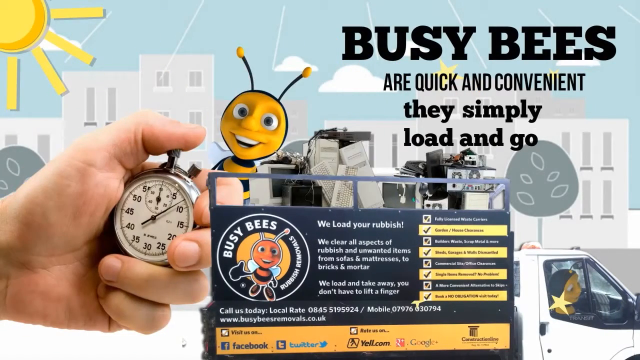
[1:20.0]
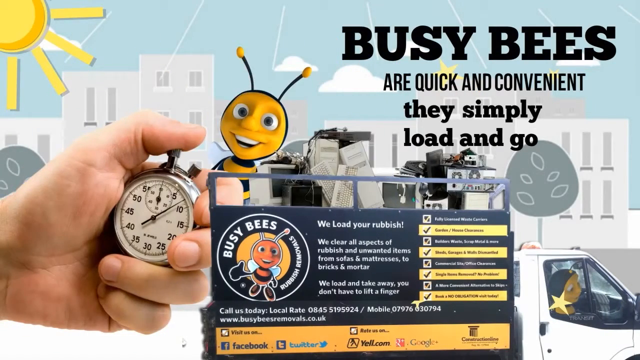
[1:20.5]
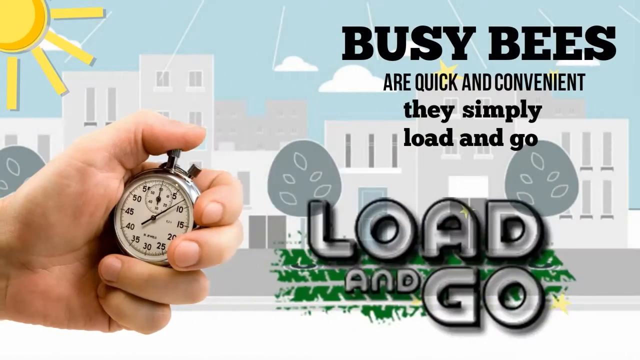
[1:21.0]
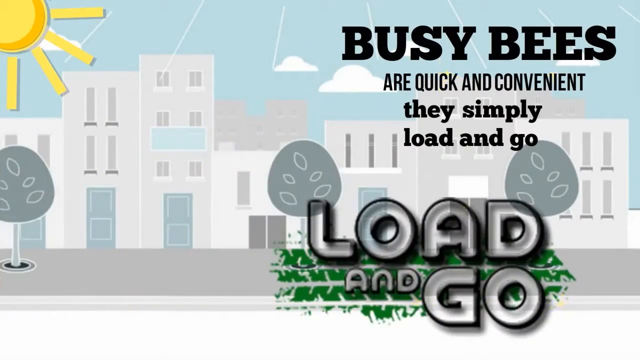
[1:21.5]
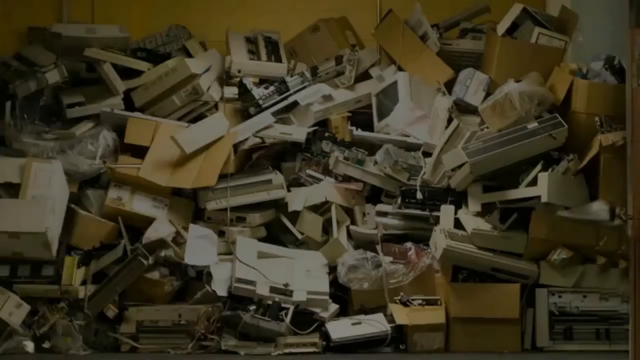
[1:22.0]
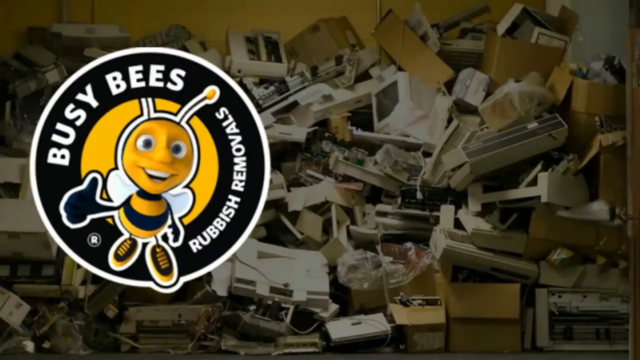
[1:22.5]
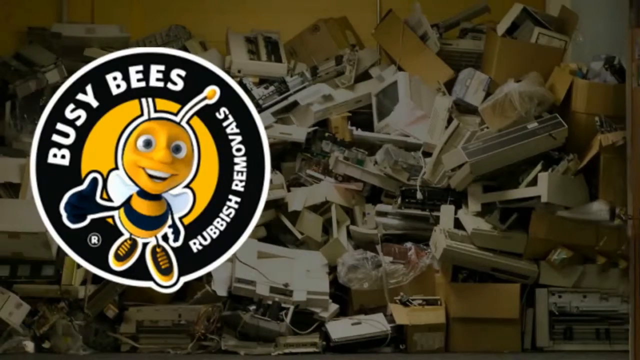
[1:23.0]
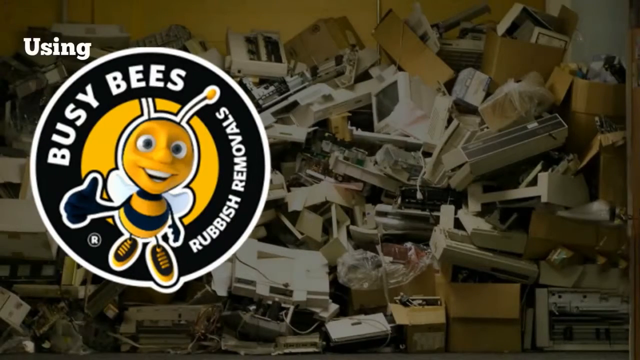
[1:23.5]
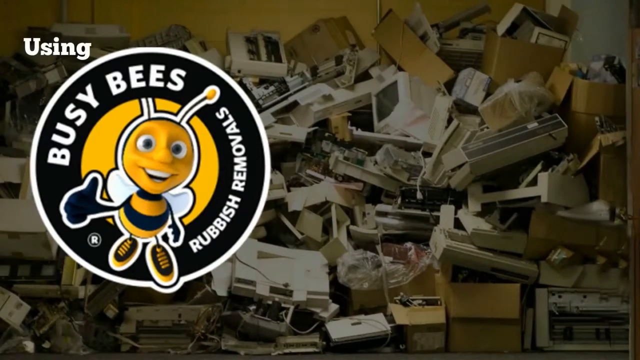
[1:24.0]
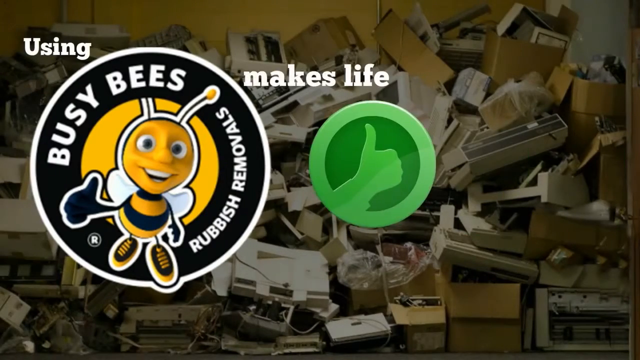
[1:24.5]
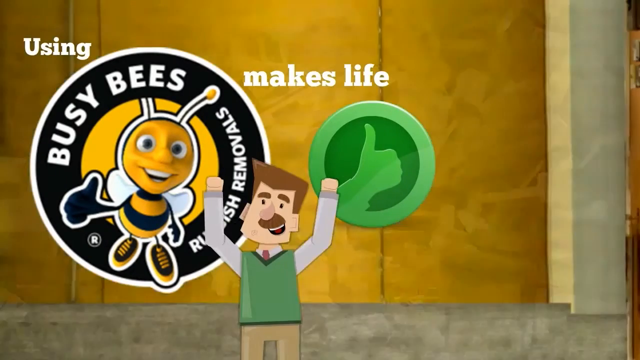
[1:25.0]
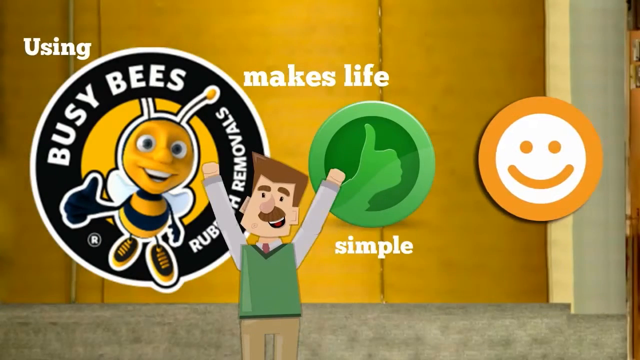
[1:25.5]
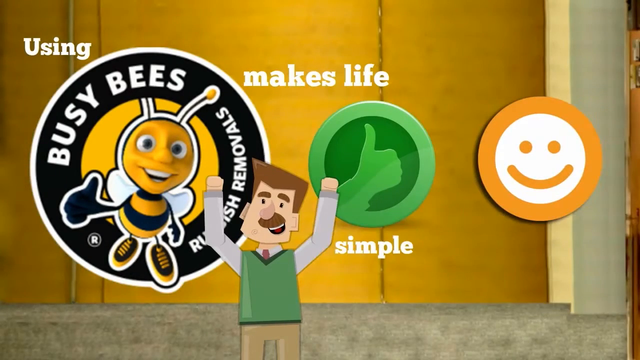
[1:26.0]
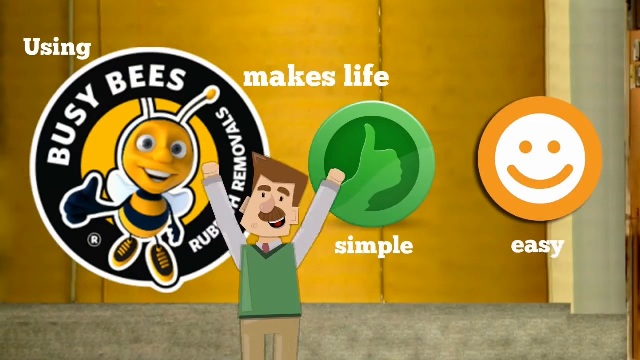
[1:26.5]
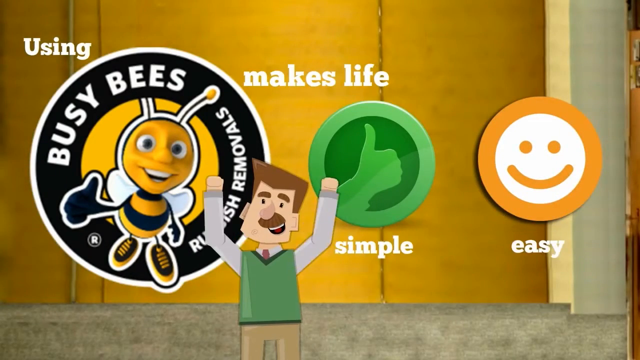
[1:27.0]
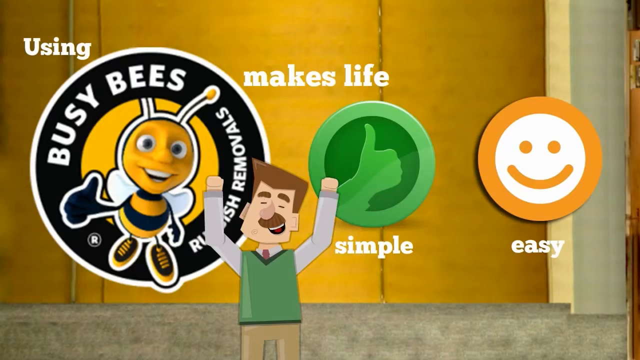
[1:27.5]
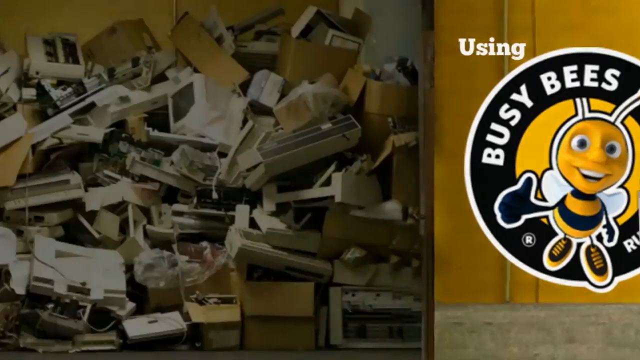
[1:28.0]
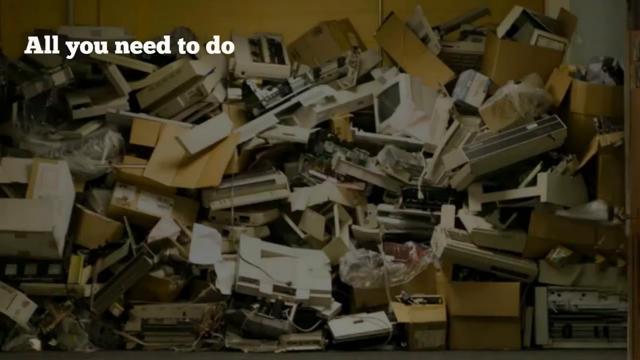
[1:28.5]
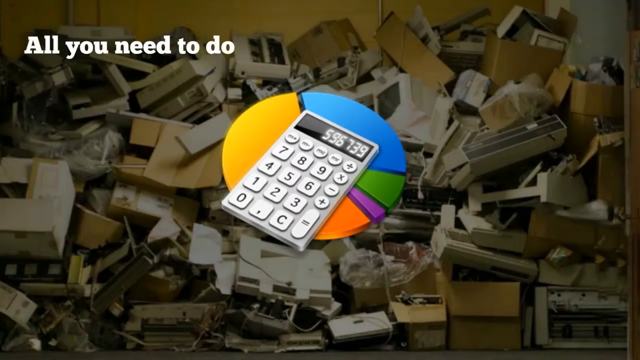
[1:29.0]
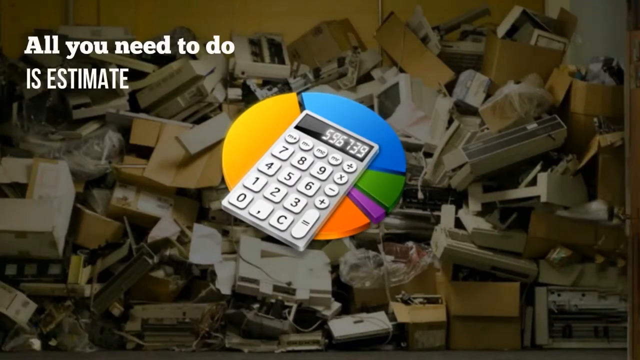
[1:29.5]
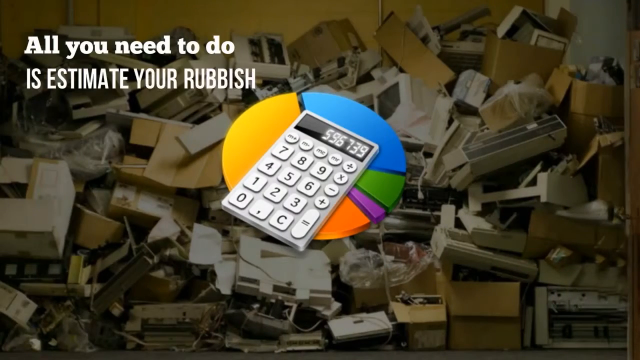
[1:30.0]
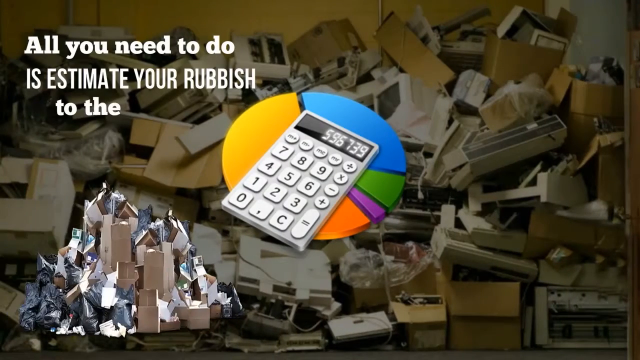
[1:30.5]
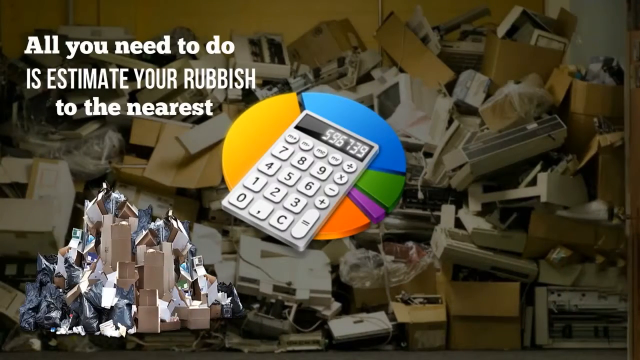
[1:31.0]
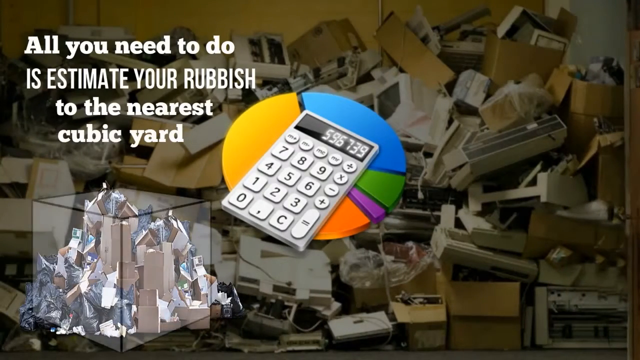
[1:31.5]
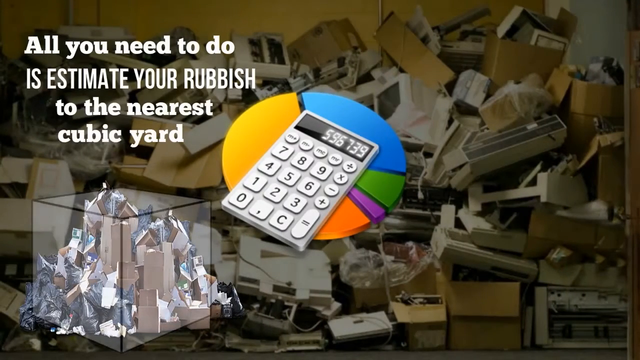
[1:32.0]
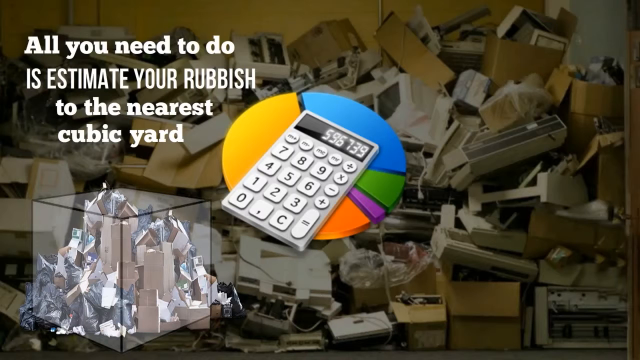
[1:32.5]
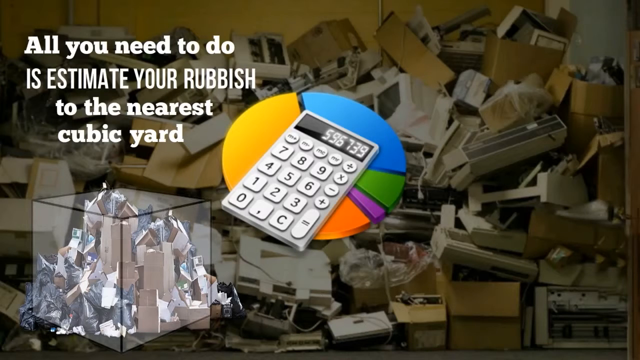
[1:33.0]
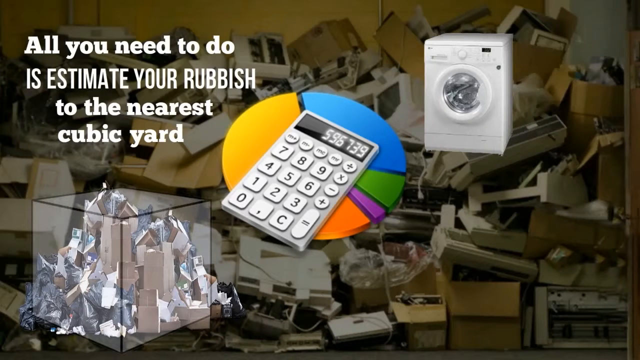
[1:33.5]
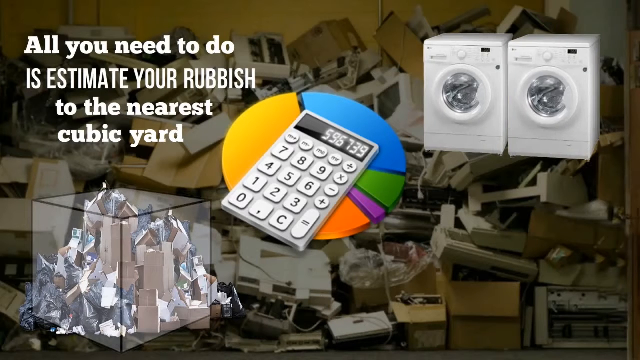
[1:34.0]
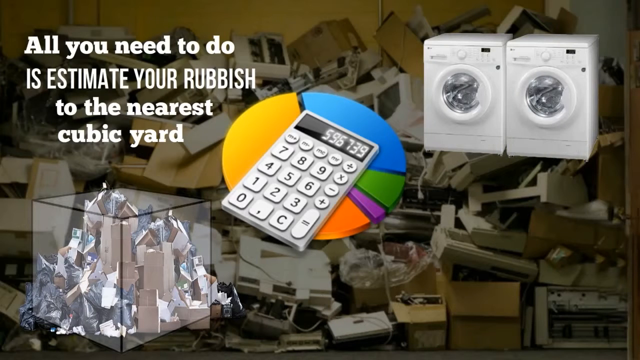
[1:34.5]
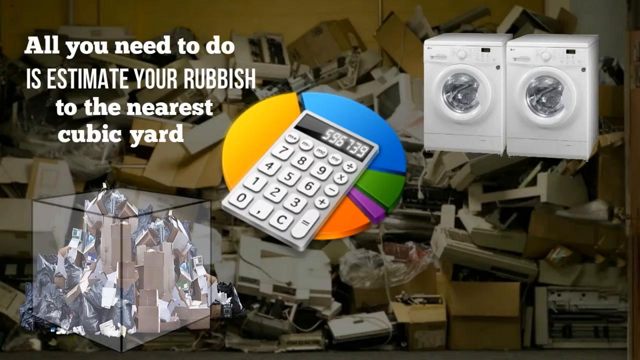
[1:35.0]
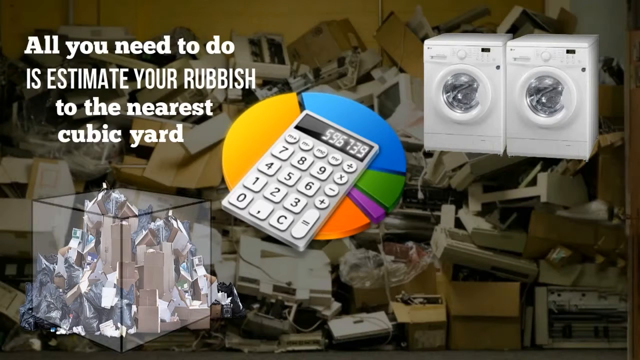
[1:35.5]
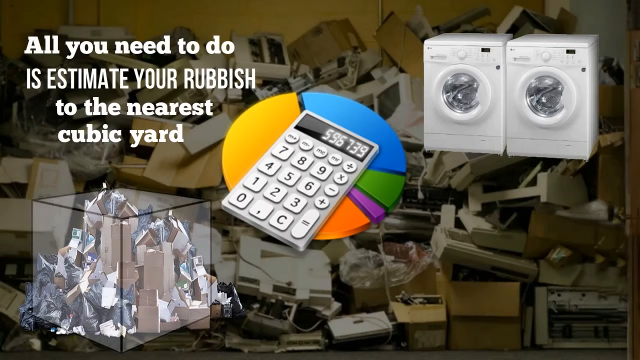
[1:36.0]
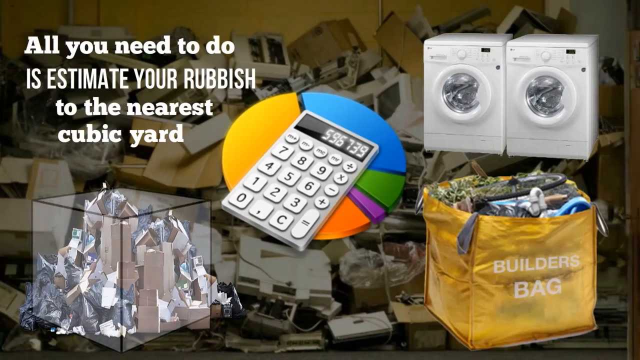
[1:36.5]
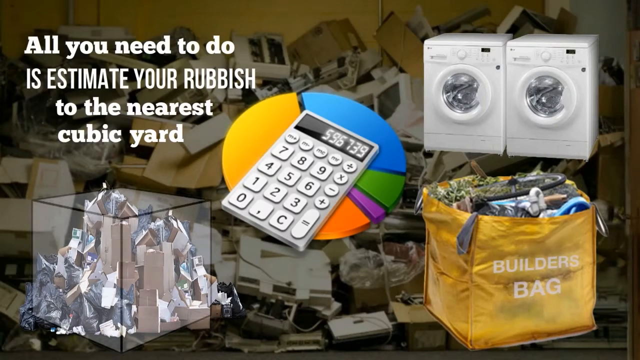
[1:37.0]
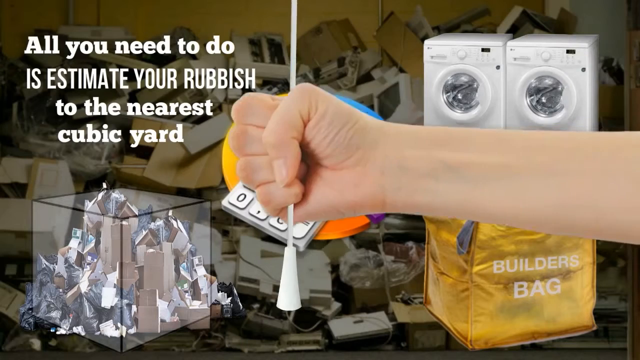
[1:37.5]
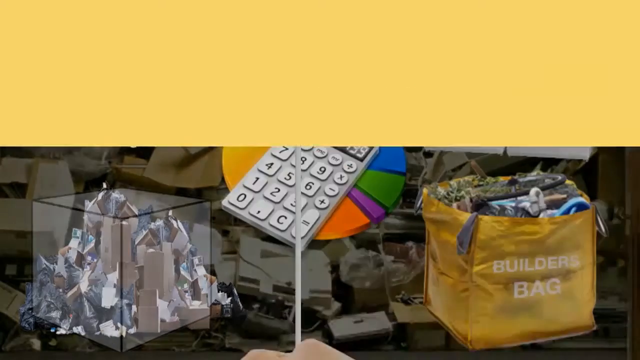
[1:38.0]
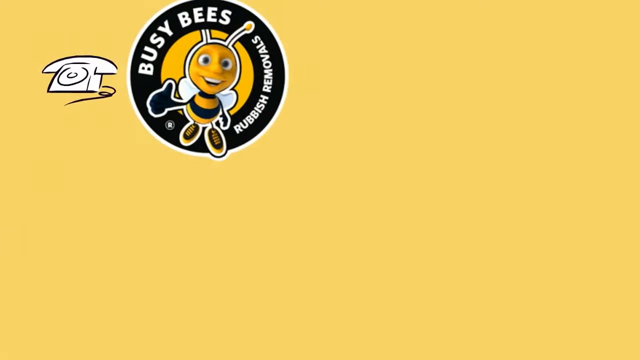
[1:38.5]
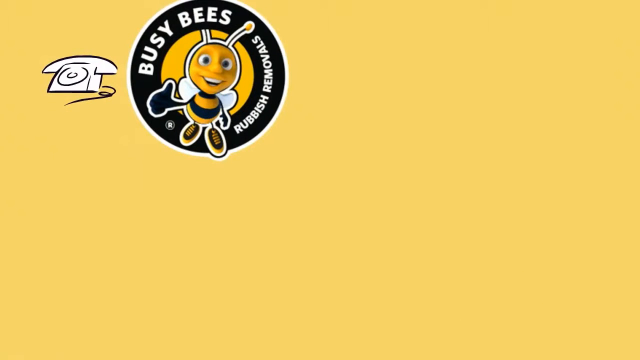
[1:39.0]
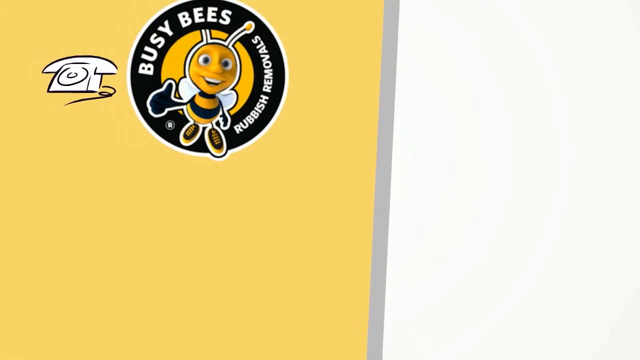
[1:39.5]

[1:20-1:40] The scene changes and text in the bottom right reads "load and go." In another new scene, the background is a heap of electronic trash and debris, with a very large Busy Bees logo on the left. Captions appear across the page reading "using Busy Bees makes life simple easy," and the cartoon character smiles with his hands and arms up in the air. The scene changes again to the same background of trash and waste, with captions in the upper left reading "all you need to do is estimate your rubbish to the nearest cubic yard." As an example, a translucent 3D cube is in the bottom left area, and a pile of trash forms inside it. In the middle is a calculator, with a pie chart behind it divided into five categories: yellow, orange, purple, green and blue. A washer and dryer appear in the upper right area, and a bag labeled "Builder's Bag" appears in the bottom right. A hand appears from the right side and pulls down the cord of a curtain. The Busy Bees logo then appears in the upper left with an image of a telephone, and the cartoon man on the right makes a call on a cell phone.